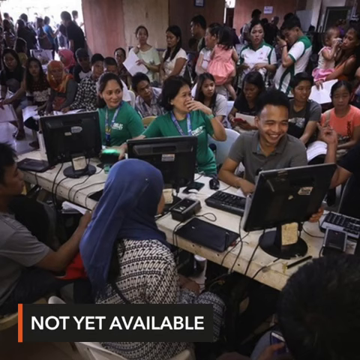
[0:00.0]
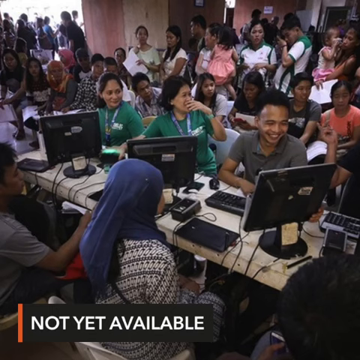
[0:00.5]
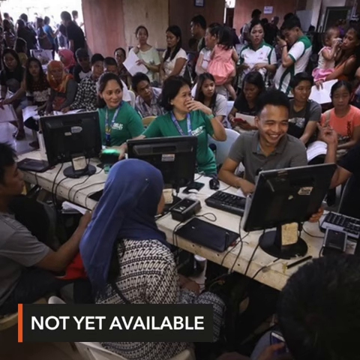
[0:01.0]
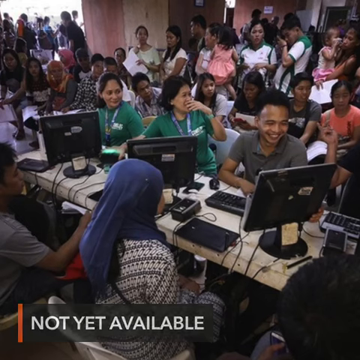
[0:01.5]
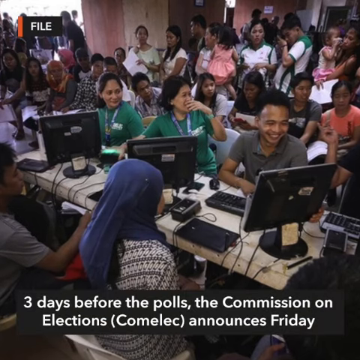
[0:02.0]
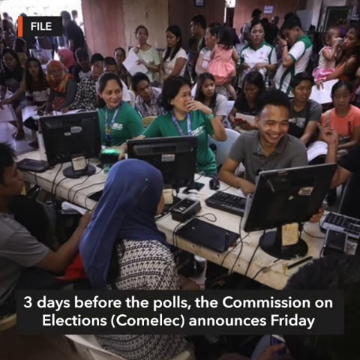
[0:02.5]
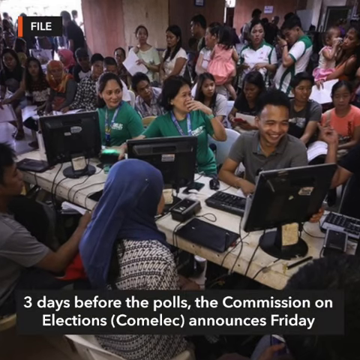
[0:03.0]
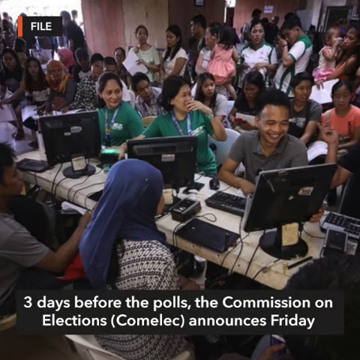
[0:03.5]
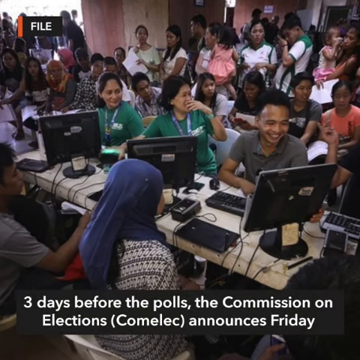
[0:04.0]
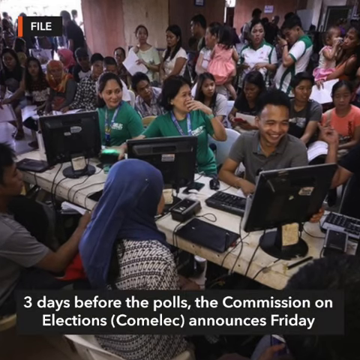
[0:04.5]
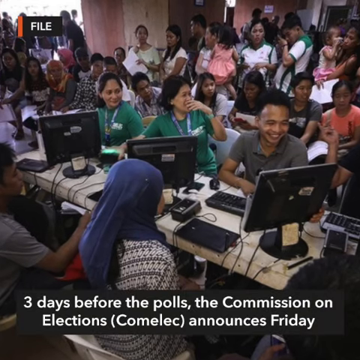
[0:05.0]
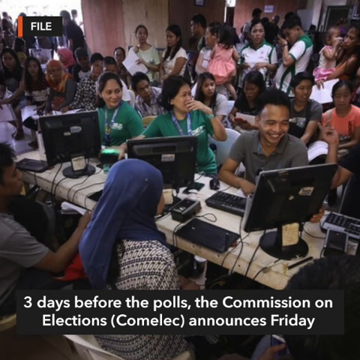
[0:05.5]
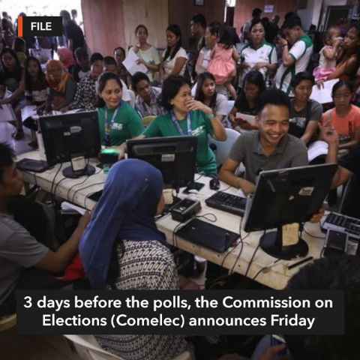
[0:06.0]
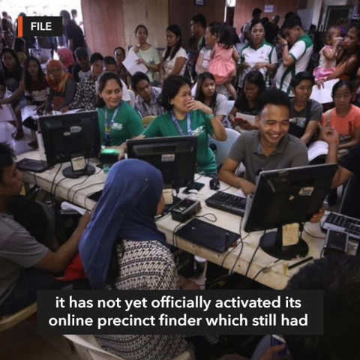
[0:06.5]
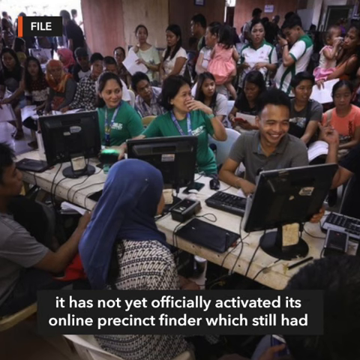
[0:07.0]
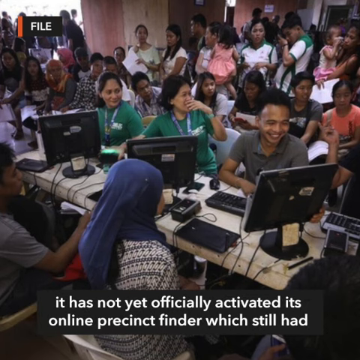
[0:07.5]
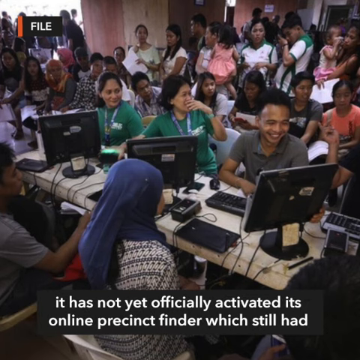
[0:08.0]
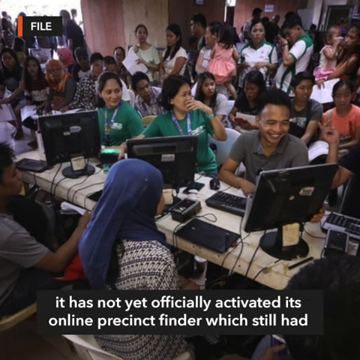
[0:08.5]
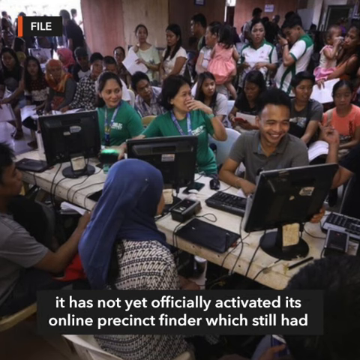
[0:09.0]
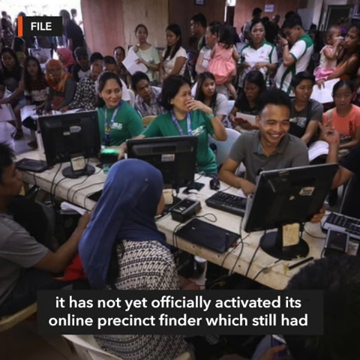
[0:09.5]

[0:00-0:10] A room is full of people of different ethnicities, all in front of computers. Three or four computers with keyboards are in sight on a table that holds them, and six people are right up against the table at the computers. Behind them, rows of other bystanders look on. Two of the people sitting near the computers wear some sort of blue lanyard and the same green shirt with some sort of writing on it. On-screen text reads "three days before the polls the commission on elections Comelec announces on Friday." The crowd in the background includes toddlers, elderly people, and young women and men in their 20s to 40s, all standing around.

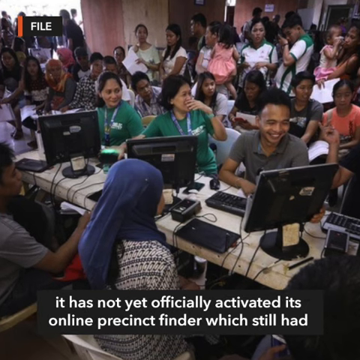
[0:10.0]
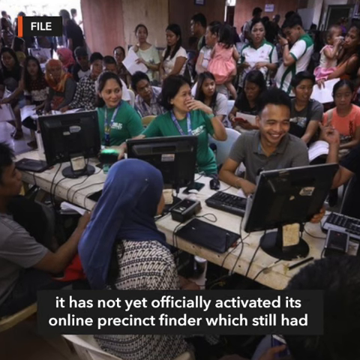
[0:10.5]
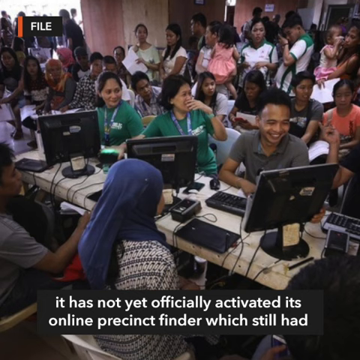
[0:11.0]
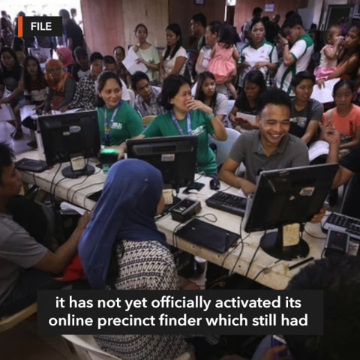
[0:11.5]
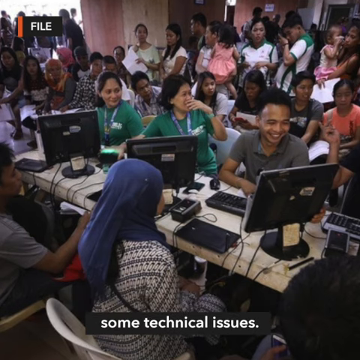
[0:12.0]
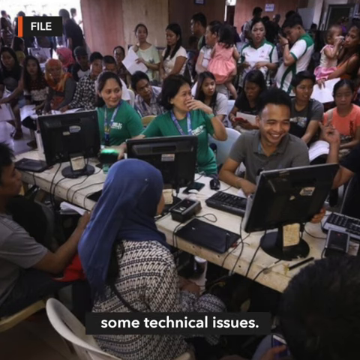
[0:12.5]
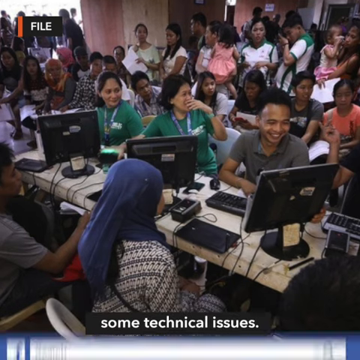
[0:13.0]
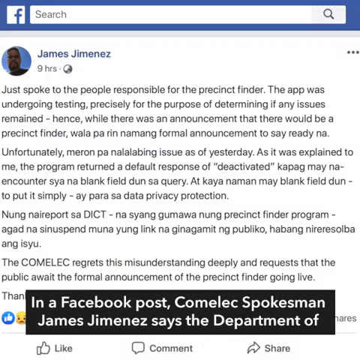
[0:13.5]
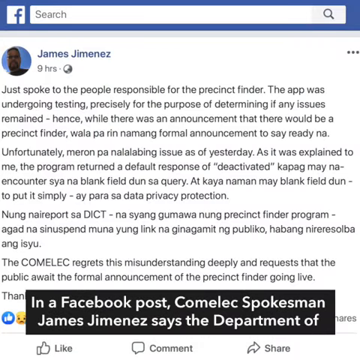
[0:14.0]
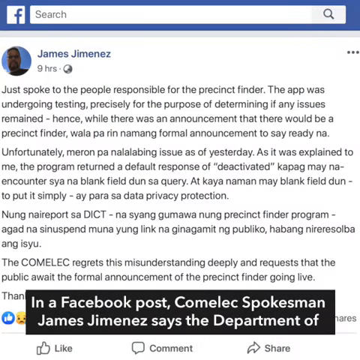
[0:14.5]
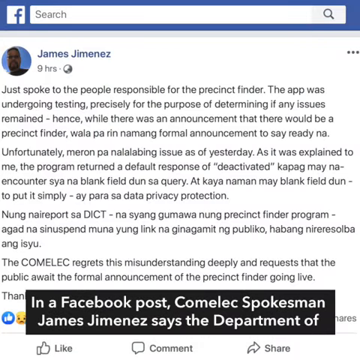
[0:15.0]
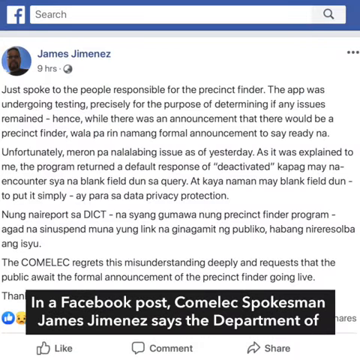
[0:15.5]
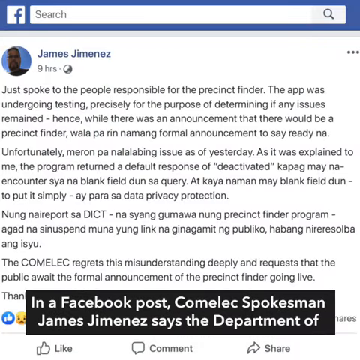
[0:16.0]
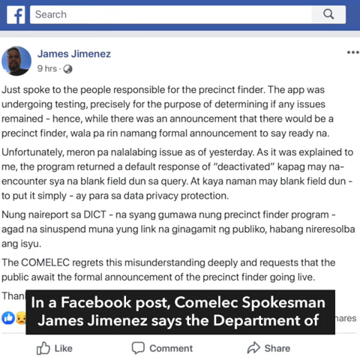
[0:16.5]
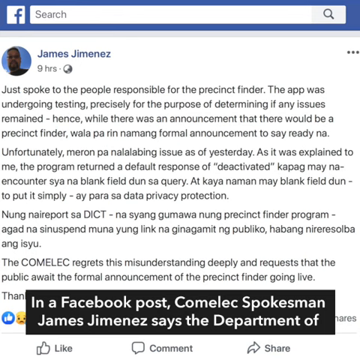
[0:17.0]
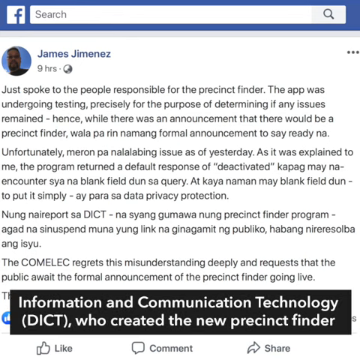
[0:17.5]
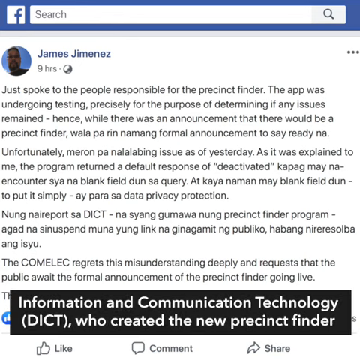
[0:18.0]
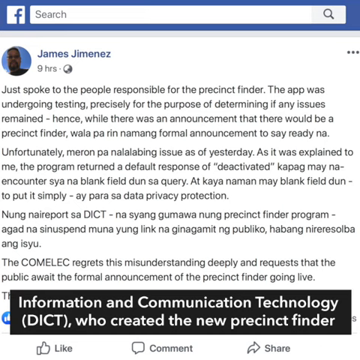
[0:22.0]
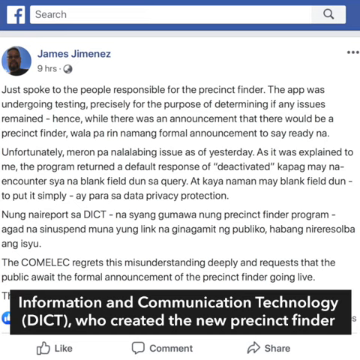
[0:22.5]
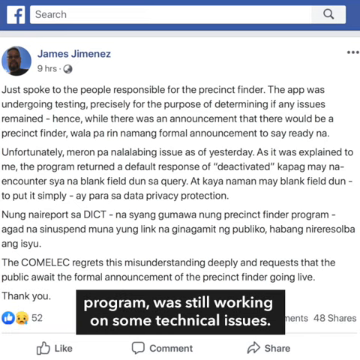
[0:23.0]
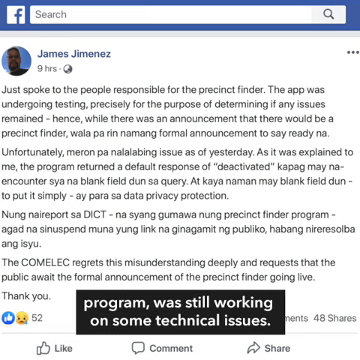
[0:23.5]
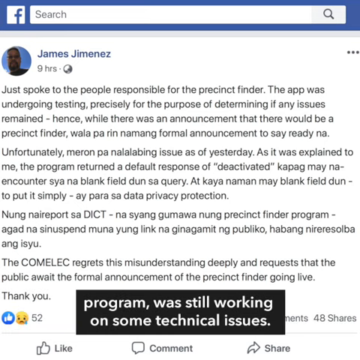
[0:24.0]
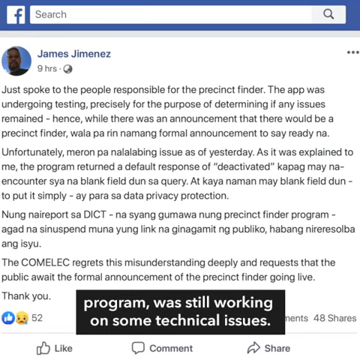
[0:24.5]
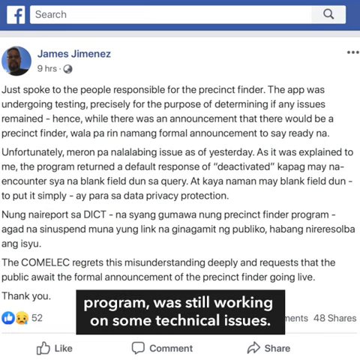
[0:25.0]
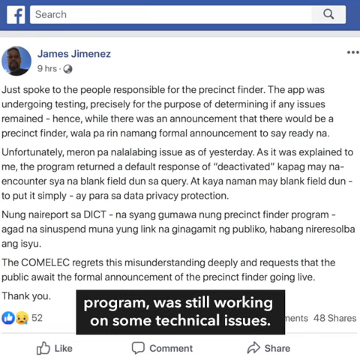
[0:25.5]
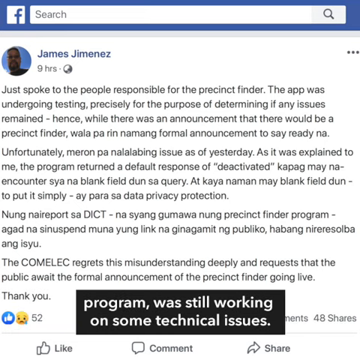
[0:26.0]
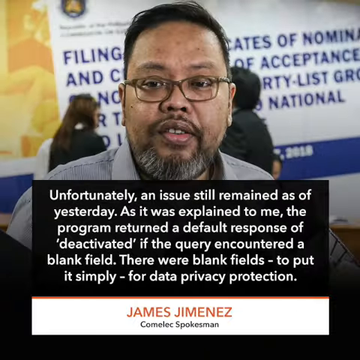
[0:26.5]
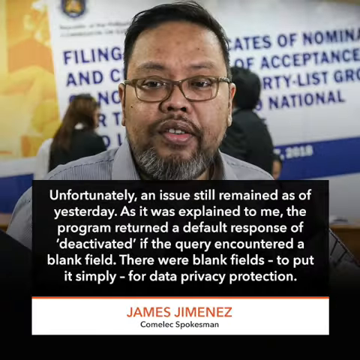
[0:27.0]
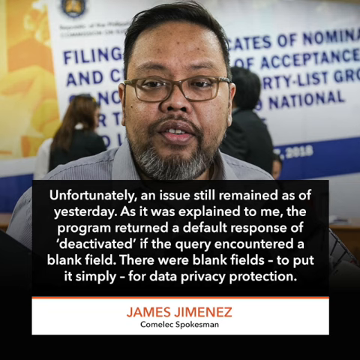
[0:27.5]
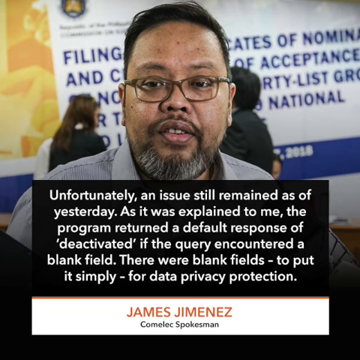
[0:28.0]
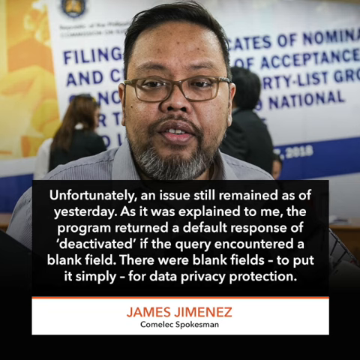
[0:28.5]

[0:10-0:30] People in what seems to be a different country gather around near a table that has a few desktop computers on it. Five people sit up close to the table, which has three computer desktops with mice and keyboards. On one side of the table are two women in green shirts with blue lanyards, appearing to be from the same company, and a man in a gray button-up shirt smiling at the screen. Behind them, people of other ethnicities carry children, while some just stand by themselves. Text over the scene, regarding the voting, states that it has not yet officially activated its online precinct finder, which still has some technical issues. The video then pans over to a Facebook post from James Jimenez stating that he just spoke to the people responsible for the precinct finder and that the app was undergoing testing precisely for the purpose of determining if any issues remained.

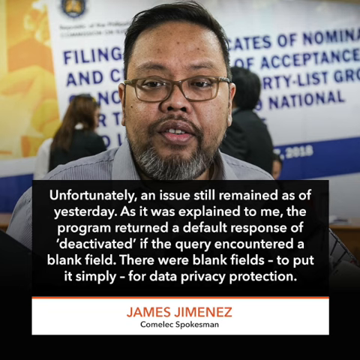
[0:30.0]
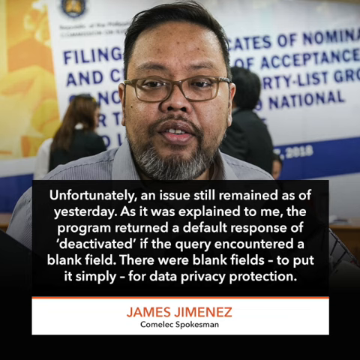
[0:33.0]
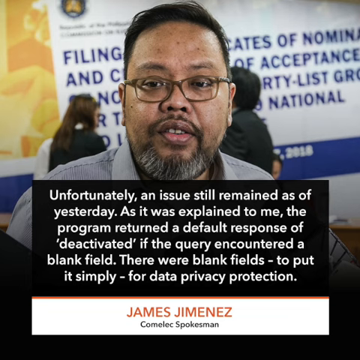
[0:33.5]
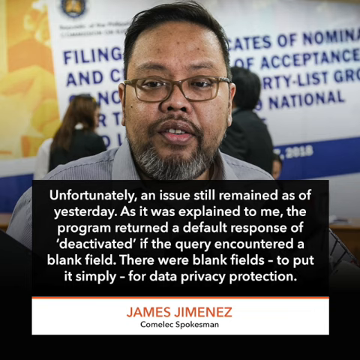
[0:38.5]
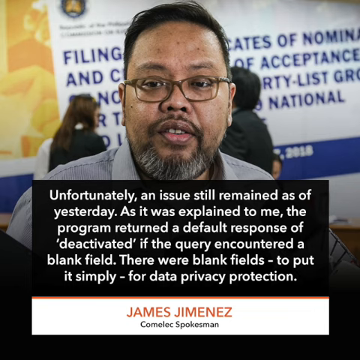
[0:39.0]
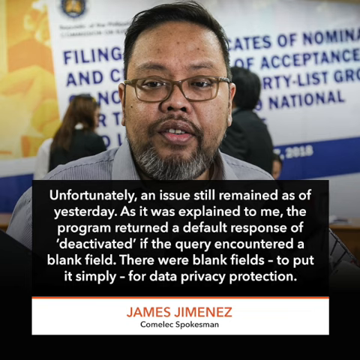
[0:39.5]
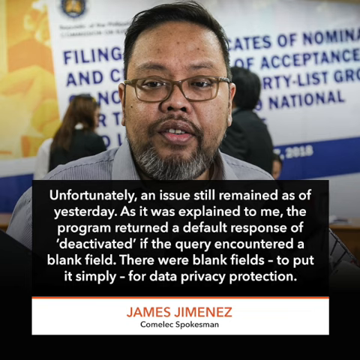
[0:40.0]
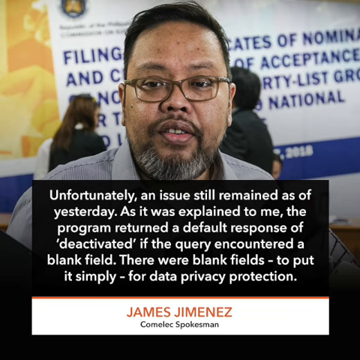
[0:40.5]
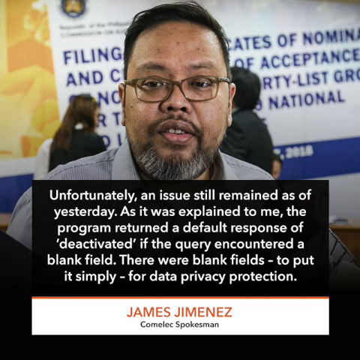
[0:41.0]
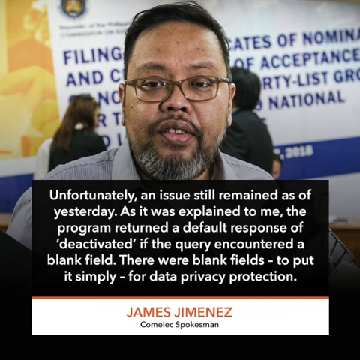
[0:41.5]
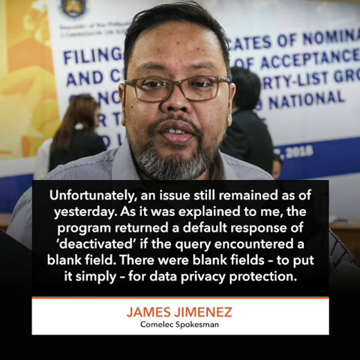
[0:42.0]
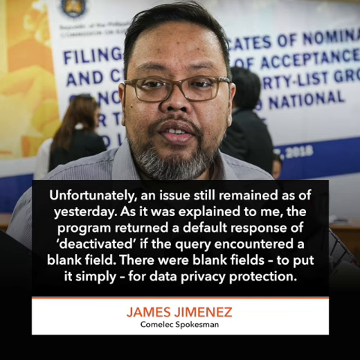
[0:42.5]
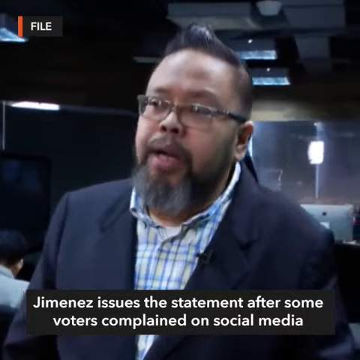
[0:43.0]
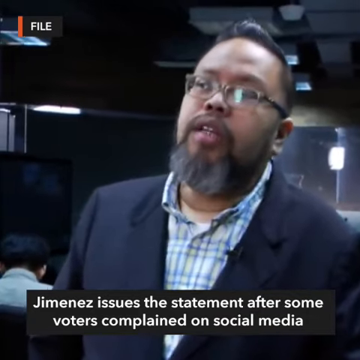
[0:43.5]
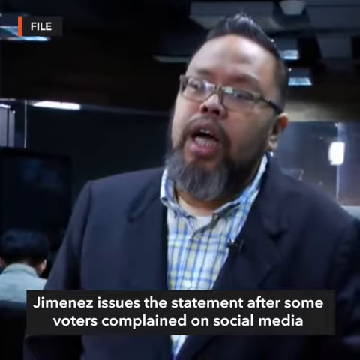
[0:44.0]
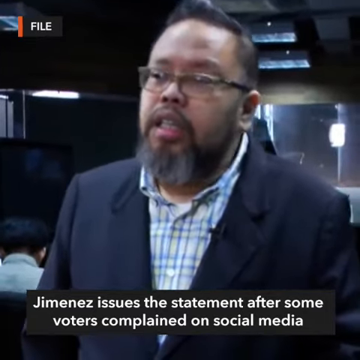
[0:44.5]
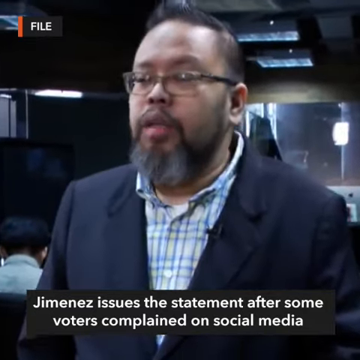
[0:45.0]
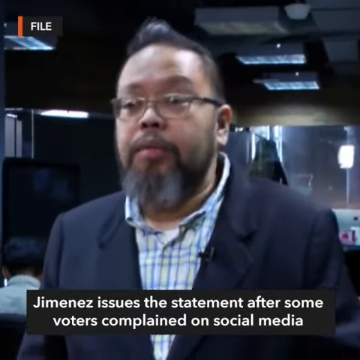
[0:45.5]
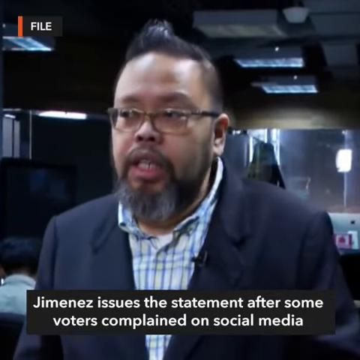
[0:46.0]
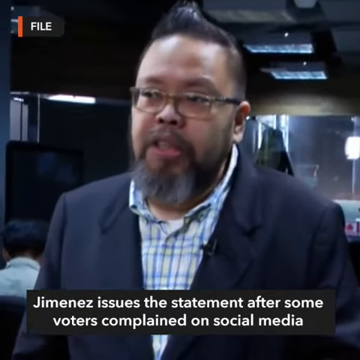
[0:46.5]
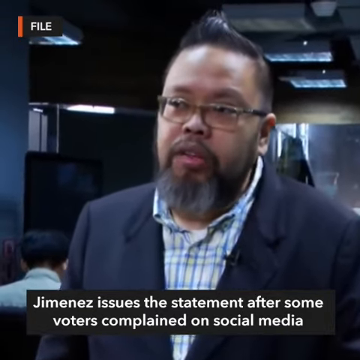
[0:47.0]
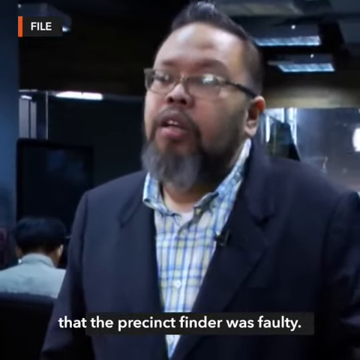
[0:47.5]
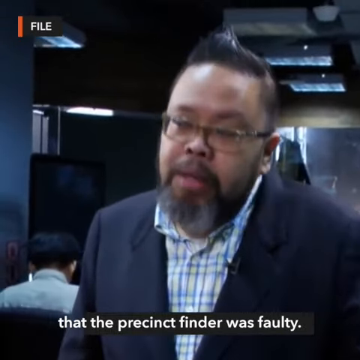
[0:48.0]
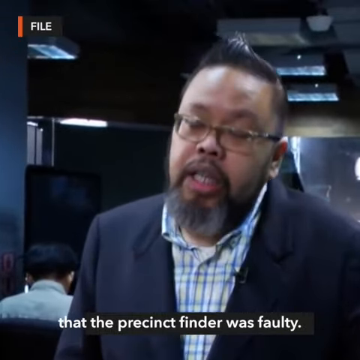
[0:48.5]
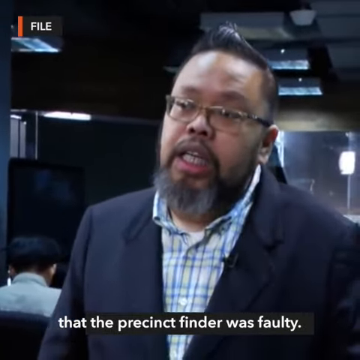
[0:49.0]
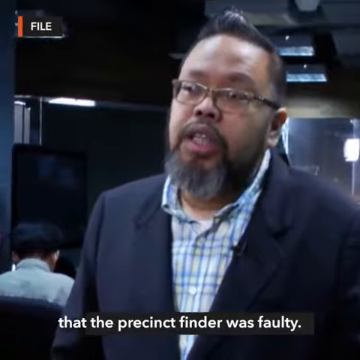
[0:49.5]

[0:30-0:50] A close-up shows James Jimenez, the Comelec spokesman, with a quote underneath him in a black text box with white lettering: "Unfortunately, an issue still remained as of yesterday. As it was explained to me, the program returned a default response of deactivated if the query encountered a blank field. There were blank fields, to put it simply, for data privacy protection." The background looks to be a formal setting. Two slightly blurry people in the background both wear black and white business outfits, and some sort of website, tweet or Facebook post is blown up in the back regarding filing and the National Guard, apparently from 2018. The video then focuses on James Jimenez, who seems to be speaking inside an office. He wears a black suit over a plaid blue and green button-up shirt, with a white shirt underneath the plaid shirt. He has a long gray and black beard, a short mustache above his lips, and glasses, and his hair is done back with gel, pointing upwards in sort of a little poof. He is talking, and the text underneath states that Jimenez issues a statement after some voters complained on social media that the precinct finder was faulty.